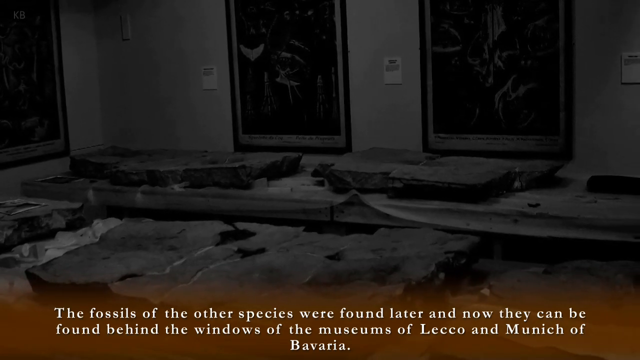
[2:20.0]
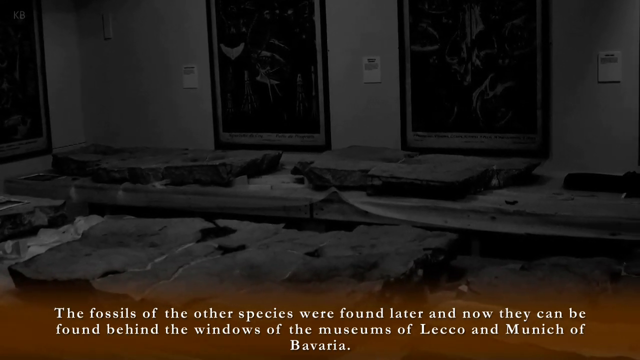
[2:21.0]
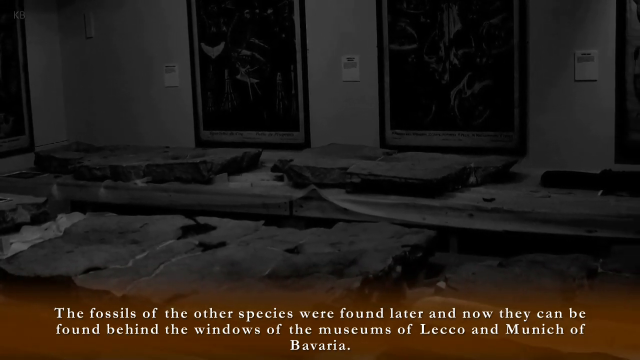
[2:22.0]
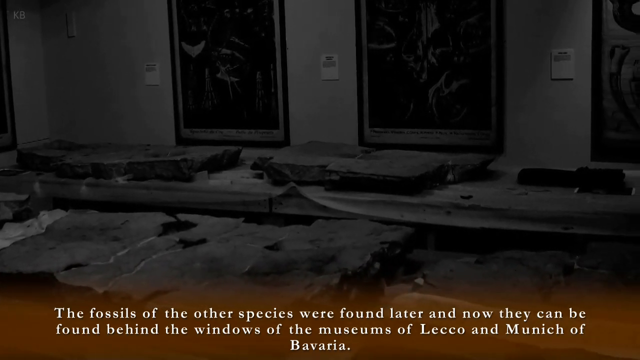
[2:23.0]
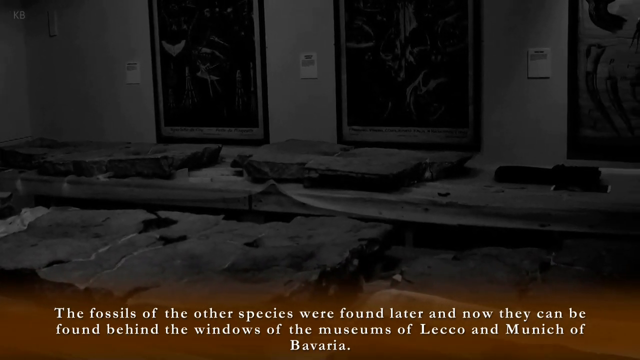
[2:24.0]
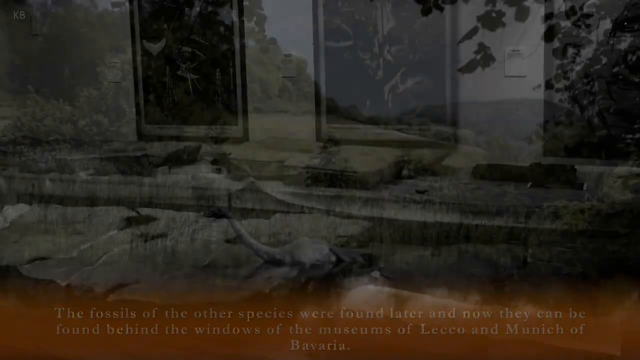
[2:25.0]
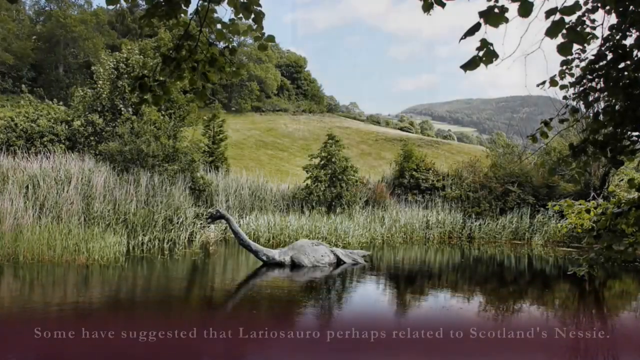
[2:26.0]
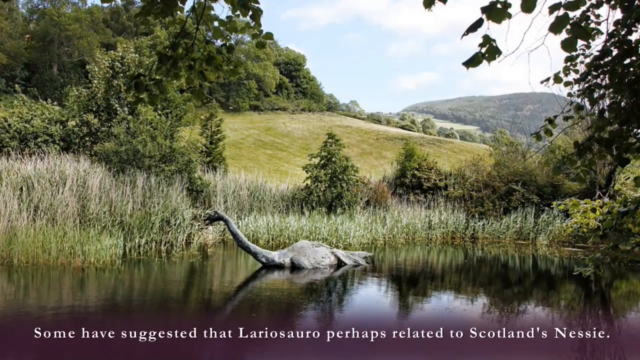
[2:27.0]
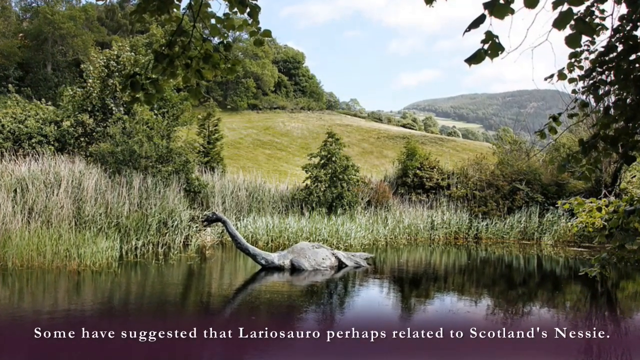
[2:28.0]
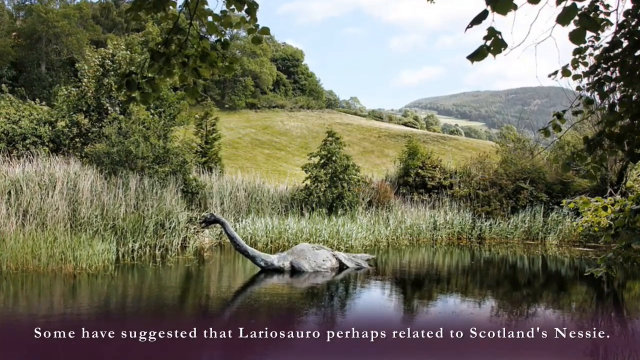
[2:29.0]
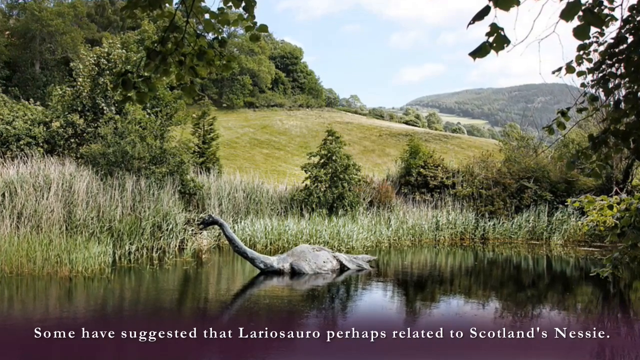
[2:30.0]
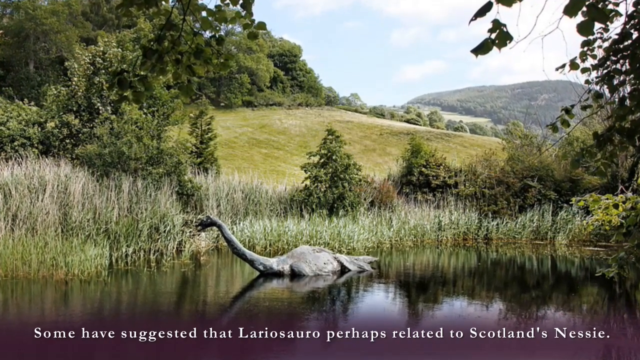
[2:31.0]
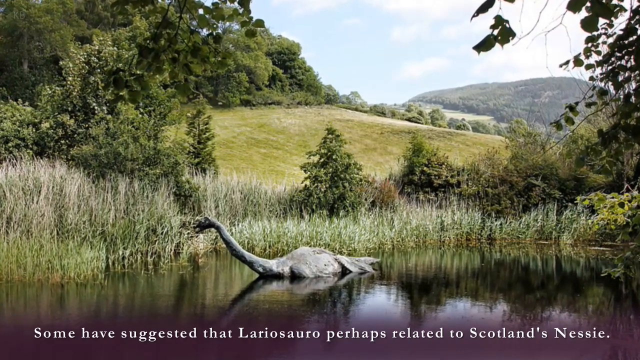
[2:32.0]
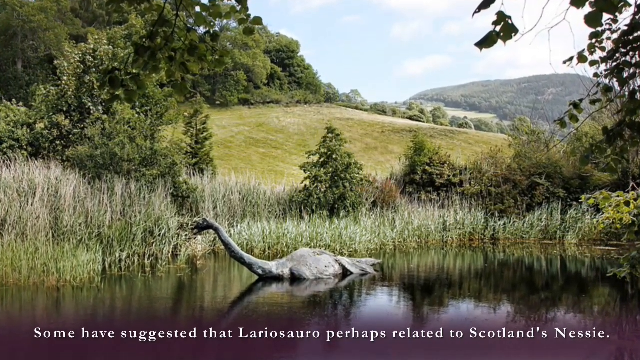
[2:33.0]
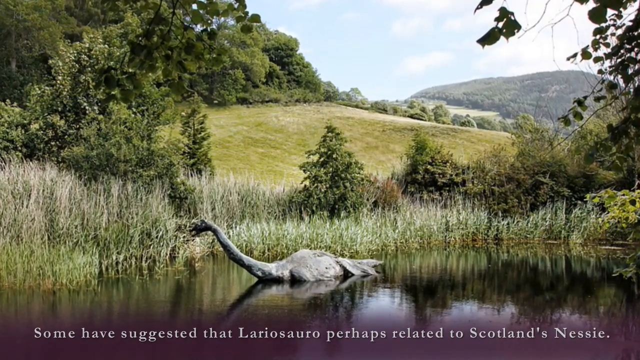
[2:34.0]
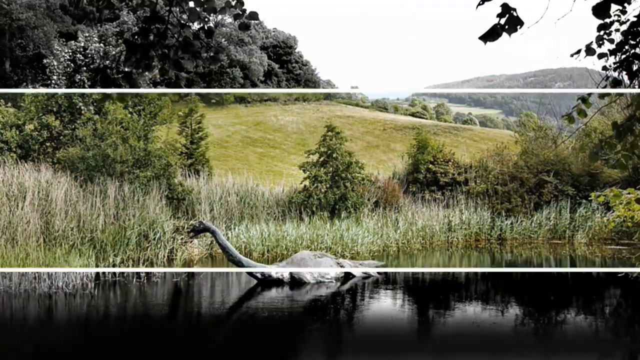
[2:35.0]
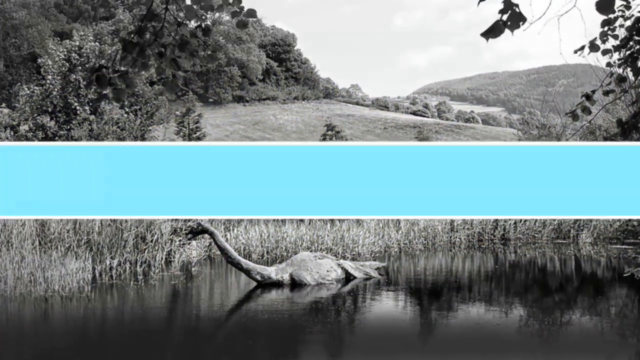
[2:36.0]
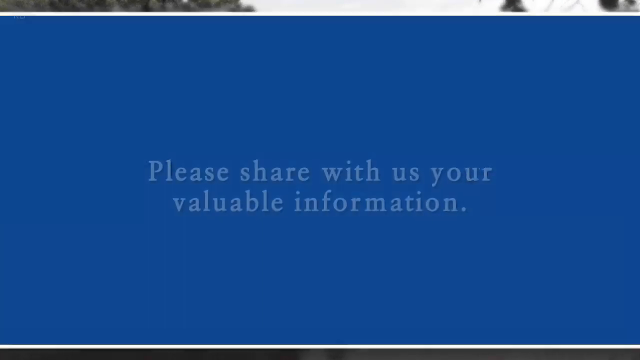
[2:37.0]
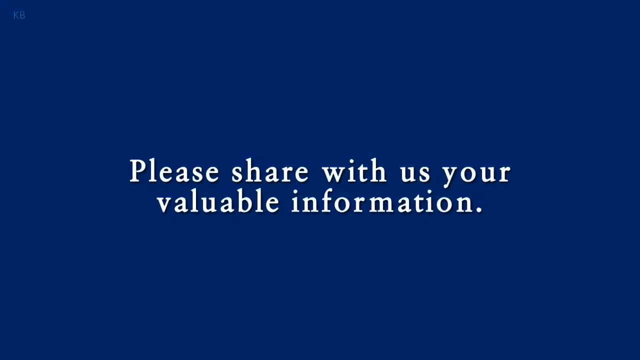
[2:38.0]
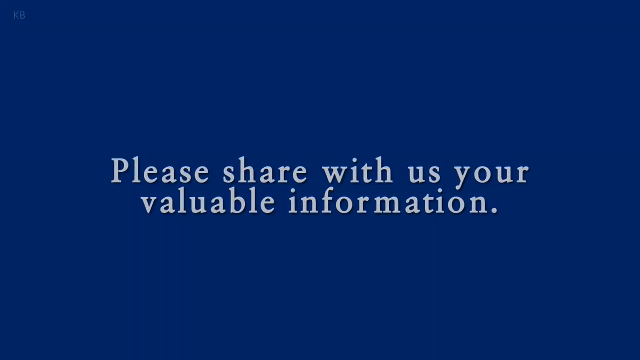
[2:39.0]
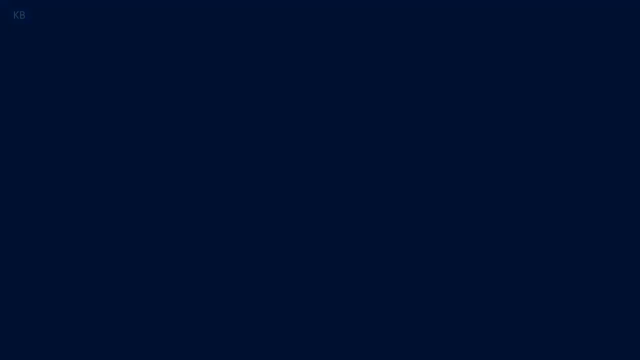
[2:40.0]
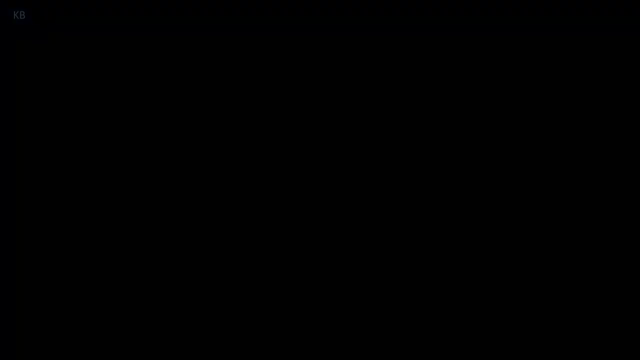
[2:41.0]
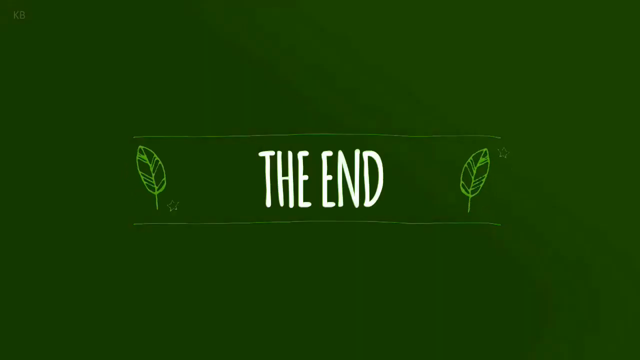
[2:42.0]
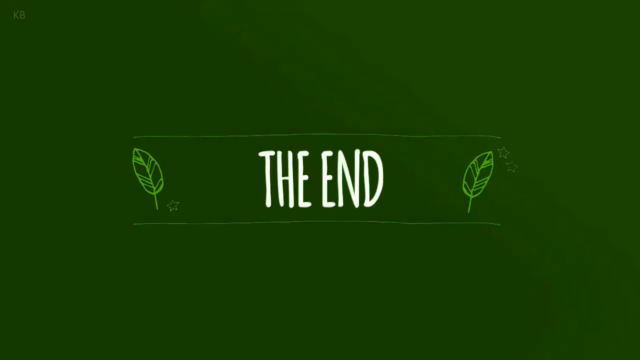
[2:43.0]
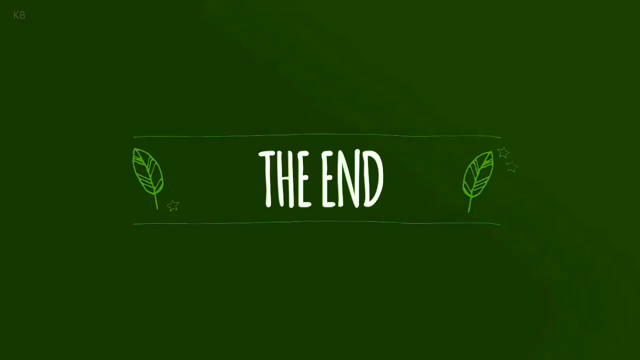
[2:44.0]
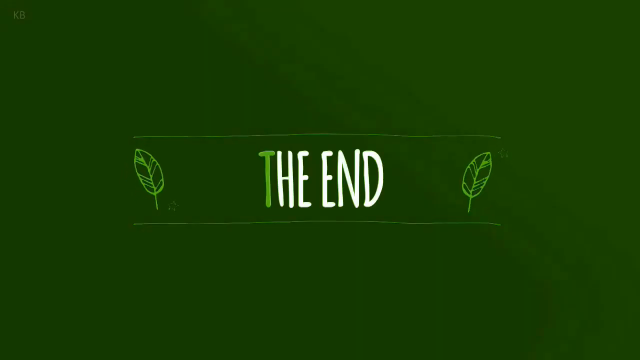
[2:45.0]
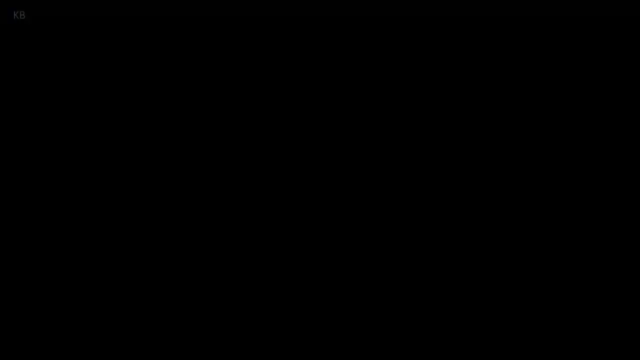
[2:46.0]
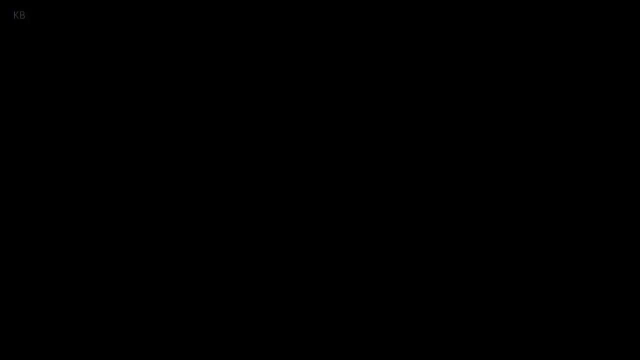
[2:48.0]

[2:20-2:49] Text repeats that the fossils of the other species were found later and can now be found behind the windows of the museum. Further text says some have suggested a relation to Scotland, asks viewers to share information, and ends with "The end."